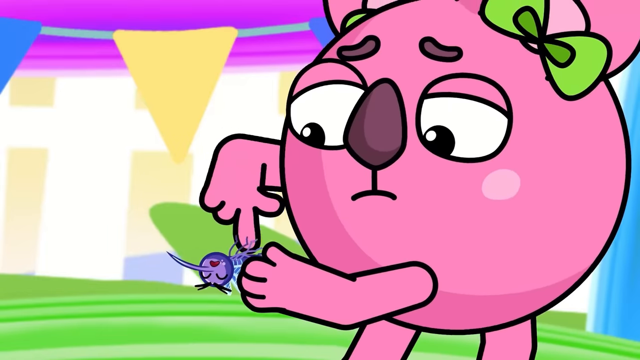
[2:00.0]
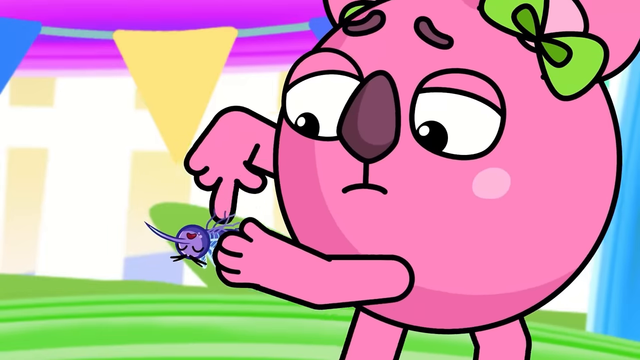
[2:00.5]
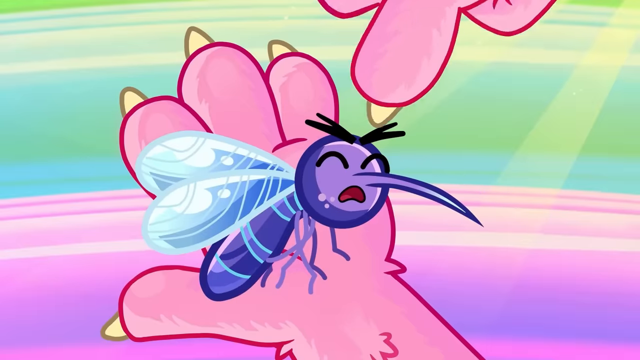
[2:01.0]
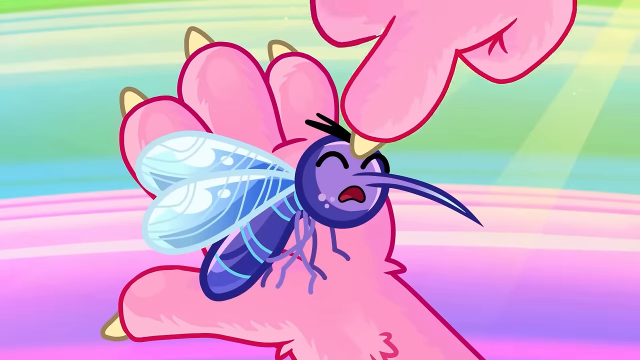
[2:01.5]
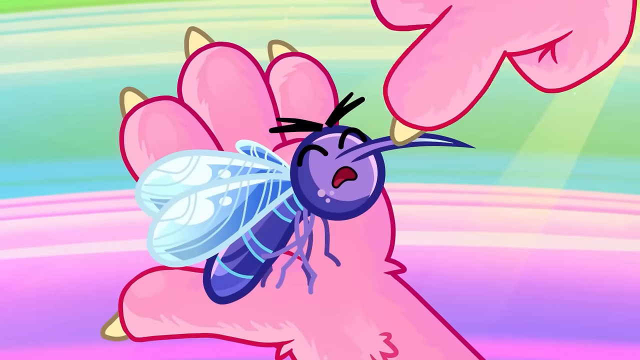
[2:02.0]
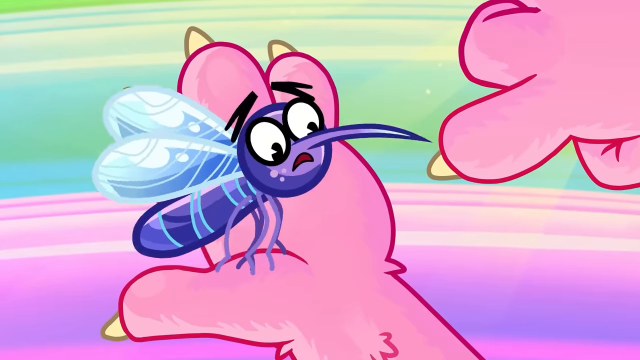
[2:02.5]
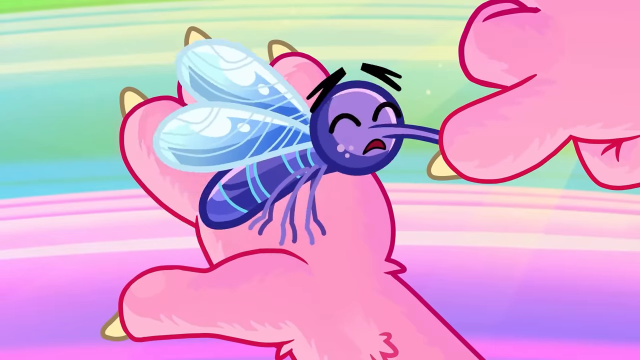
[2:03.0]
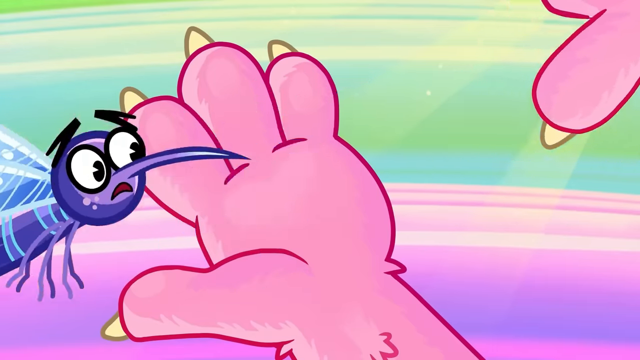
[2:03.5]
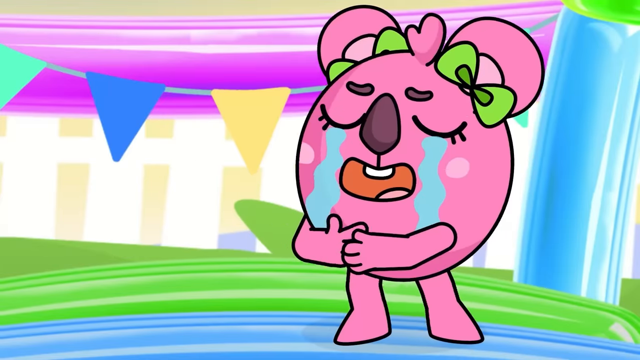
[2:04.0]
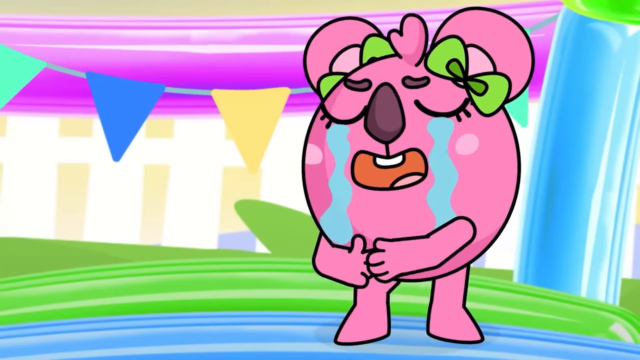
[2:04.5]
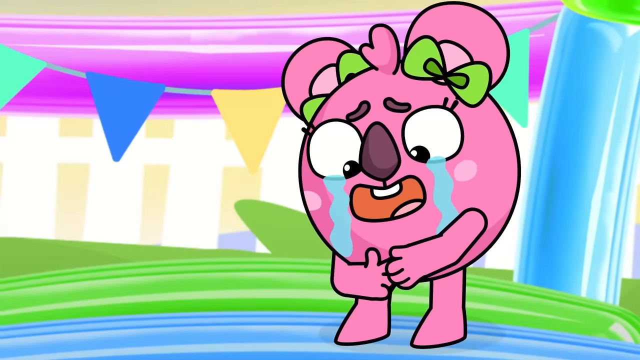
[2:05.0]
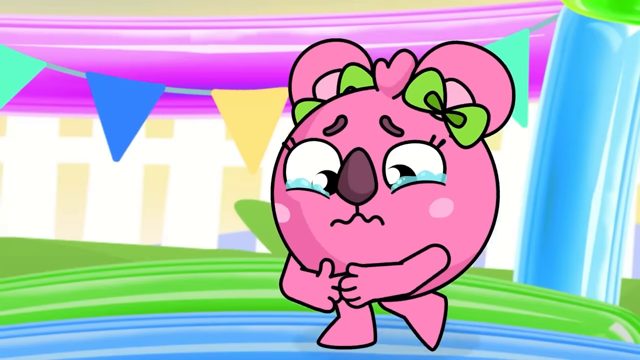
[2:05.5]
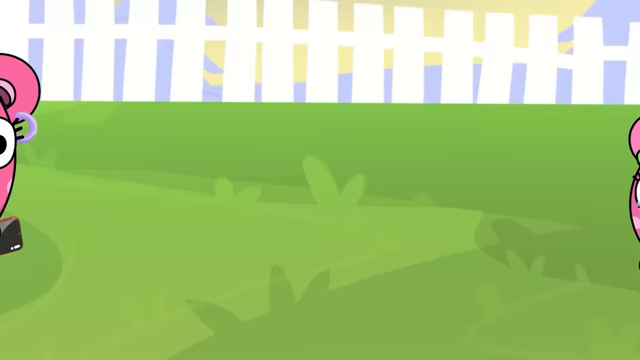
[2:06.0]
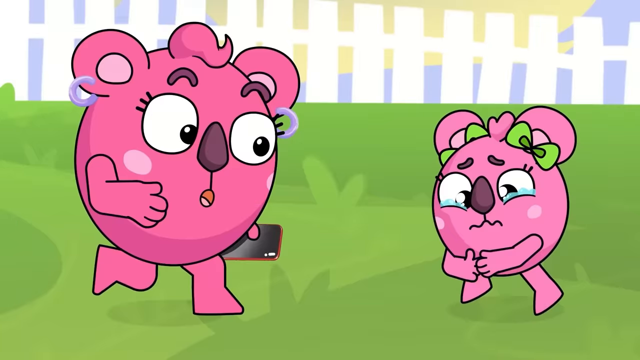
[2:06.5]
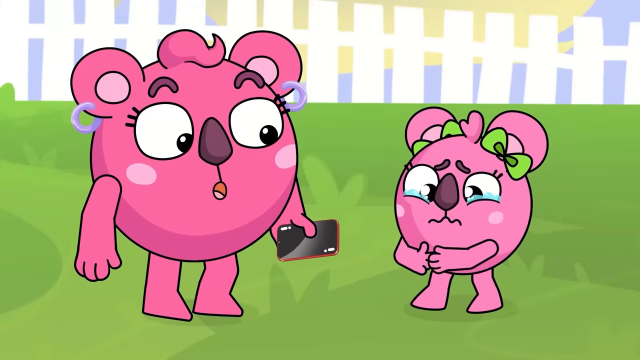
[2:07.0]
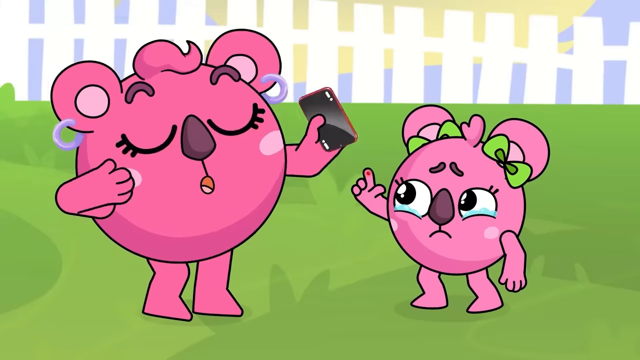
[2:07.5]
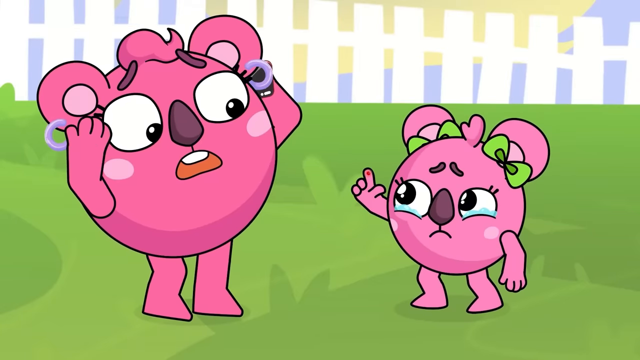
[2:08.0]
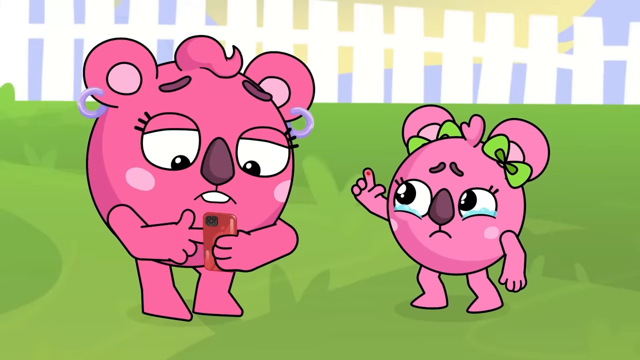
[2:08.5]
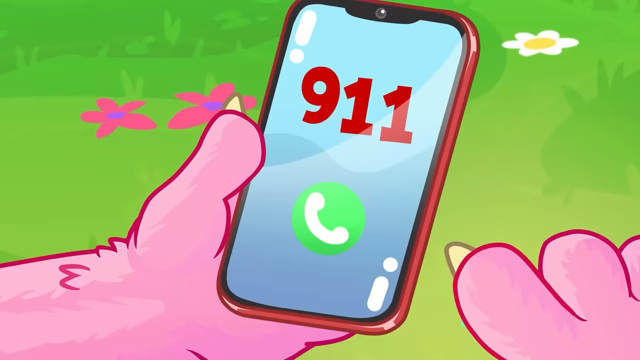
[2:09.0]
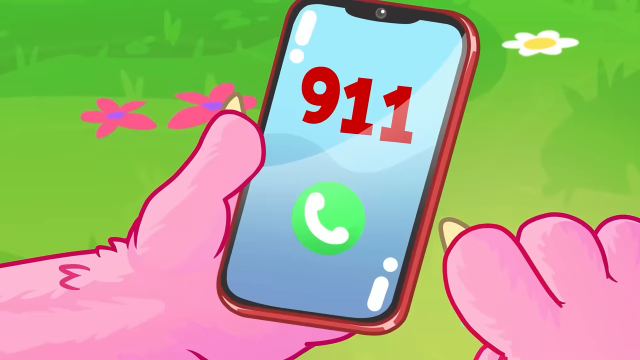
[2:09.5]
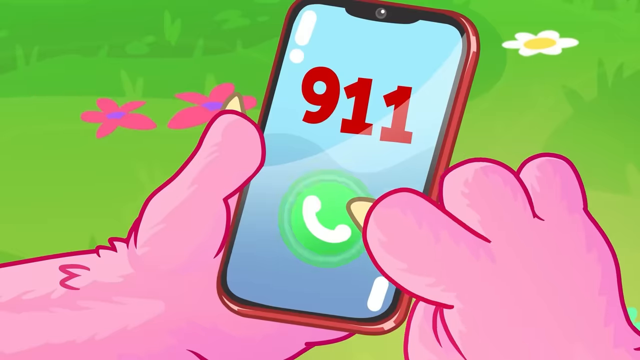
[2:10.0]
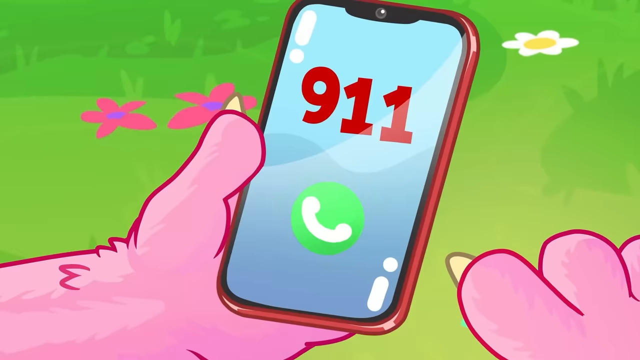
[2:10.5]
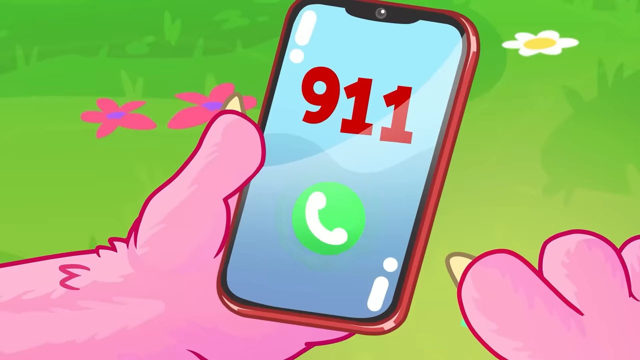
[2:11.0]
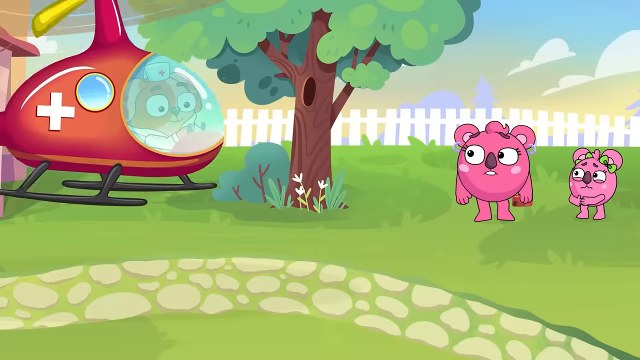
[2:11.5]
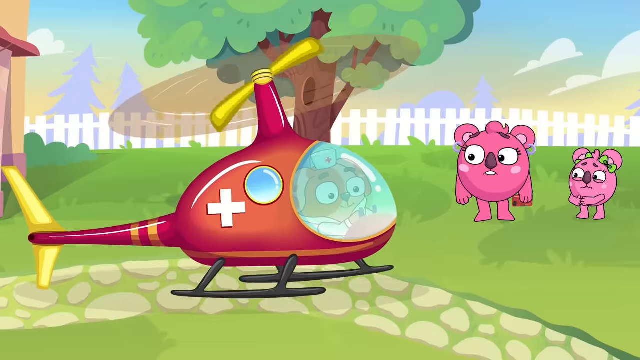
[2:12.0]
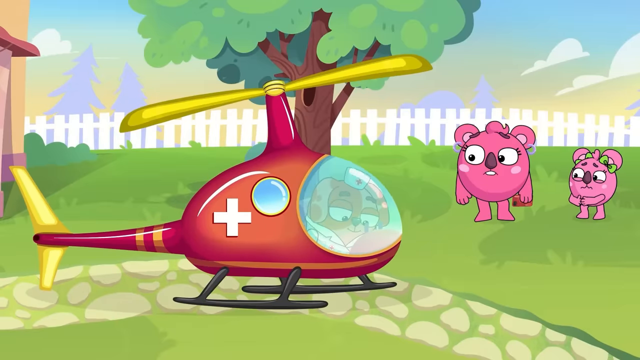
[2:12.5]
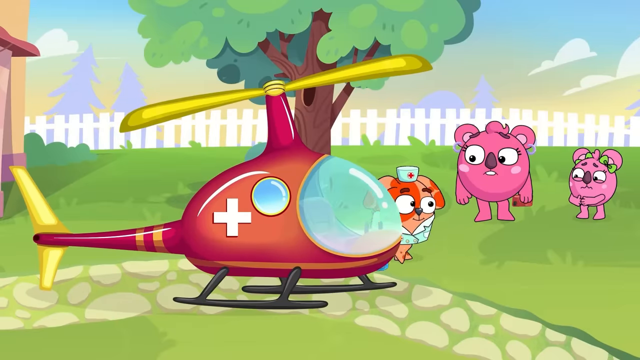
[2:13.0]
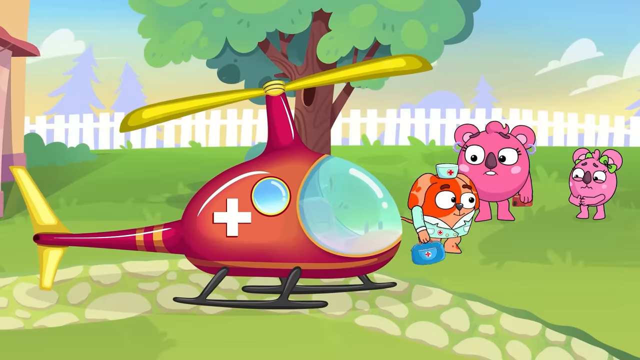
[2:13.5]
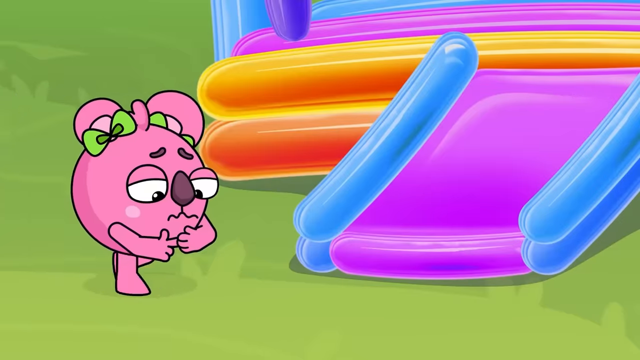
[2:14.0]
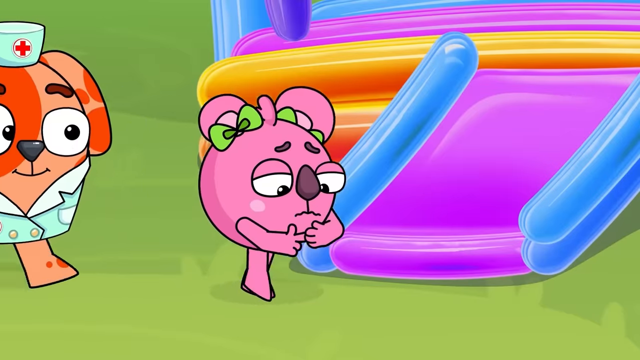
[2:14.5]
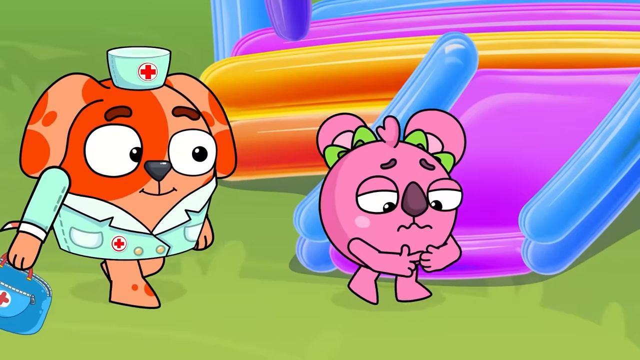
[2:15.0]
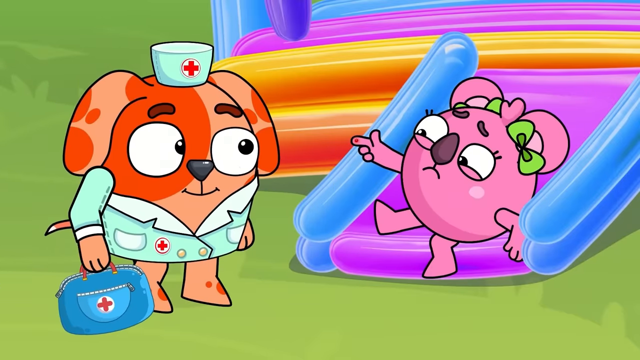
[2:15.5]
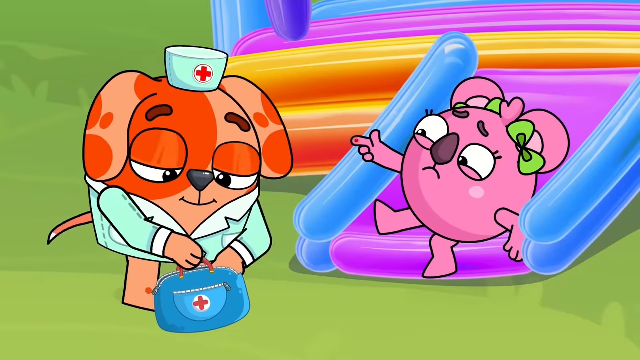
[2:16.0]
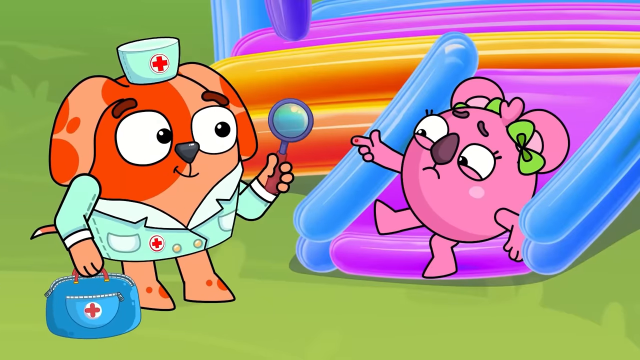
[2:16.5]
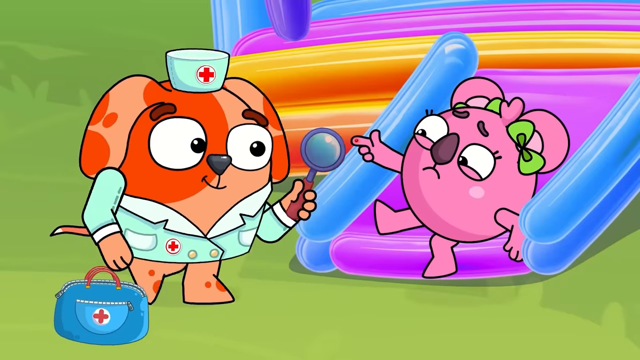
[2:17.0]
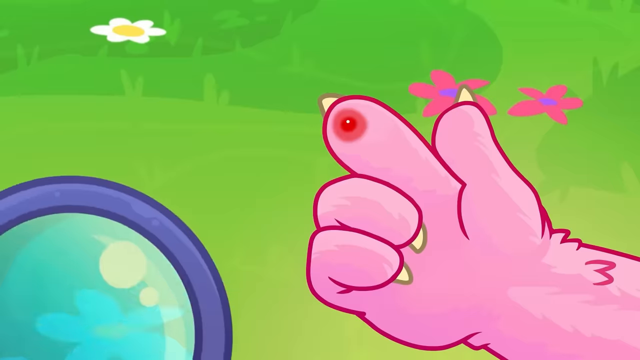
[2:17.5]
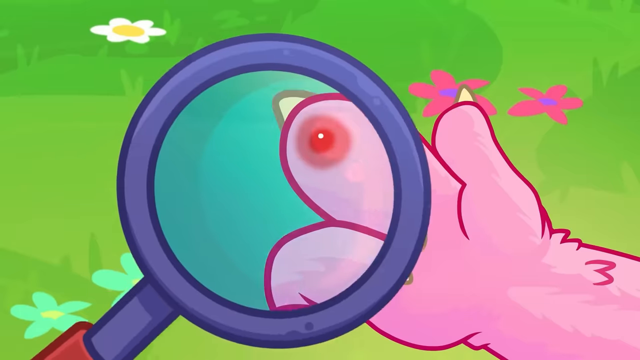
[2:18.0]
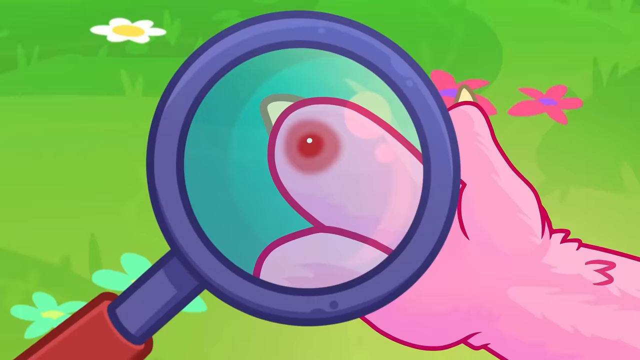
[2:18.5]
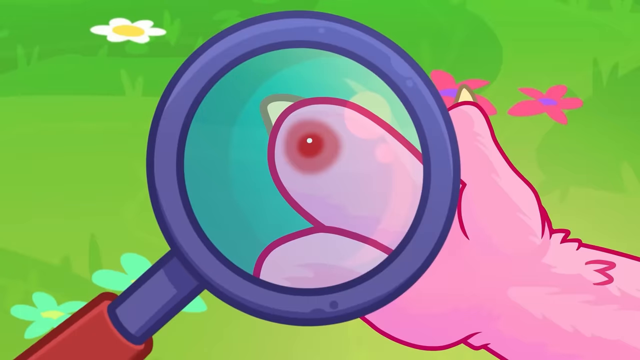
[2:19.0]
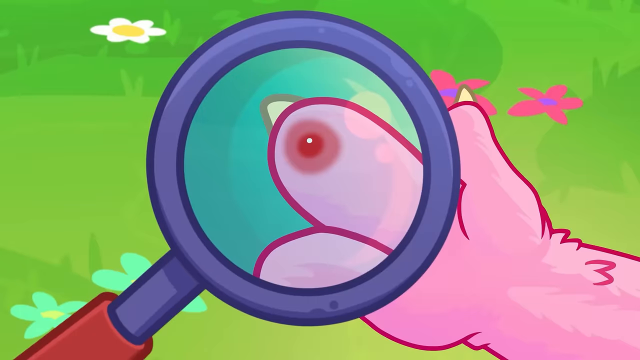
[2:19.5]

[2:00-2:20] A character pokes at the mosquito, and the mosquito comes up and pokes the little girl. She runs away holding her finger, with tears in her eyes and a little green bow, and looks down at her fingers. There is a green grassy field with white fence posts very far away. She has large white eyes, brown eyebrows and pink coloring. The mom holds what appears to be a phone, looking down and to the right, meets up with what appears to be her daughter, puts her hands on her, and calls 9-1-1 on her phone. Someone arrives in a red helicopter with yellow blades on top, a clear window and a white cross. A nurse who looks like a dog walks out holding a bag, pulls out a magnifying glass and inspects the bite.